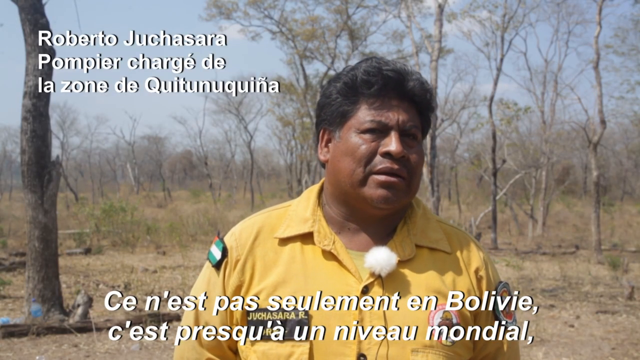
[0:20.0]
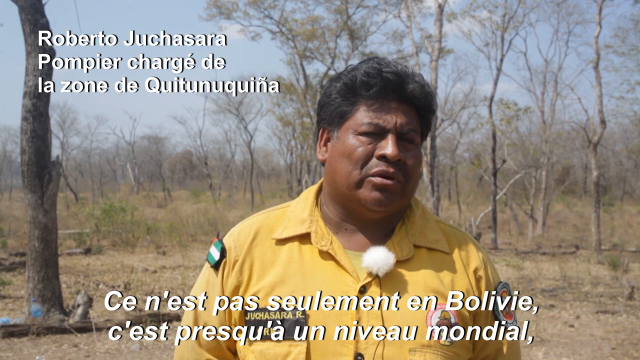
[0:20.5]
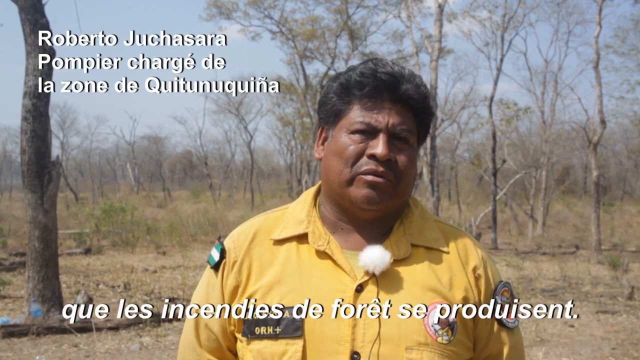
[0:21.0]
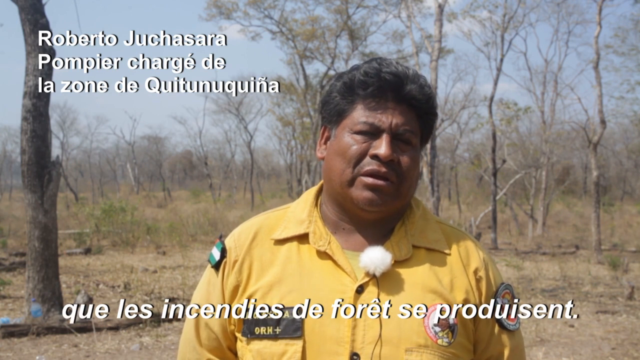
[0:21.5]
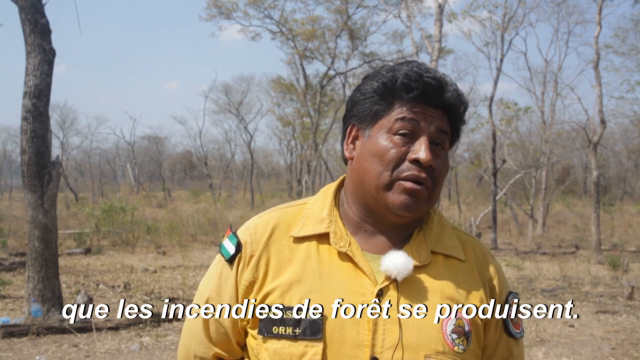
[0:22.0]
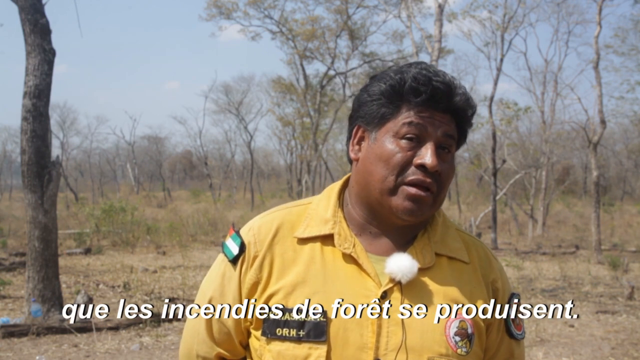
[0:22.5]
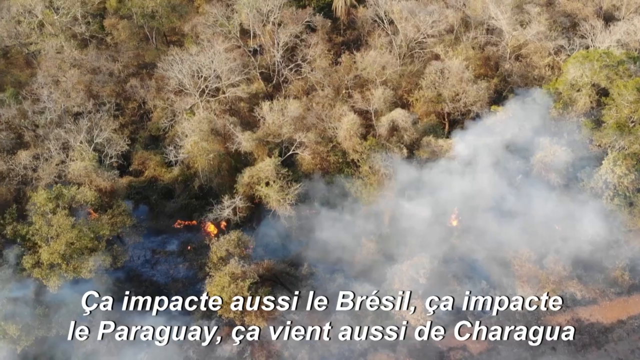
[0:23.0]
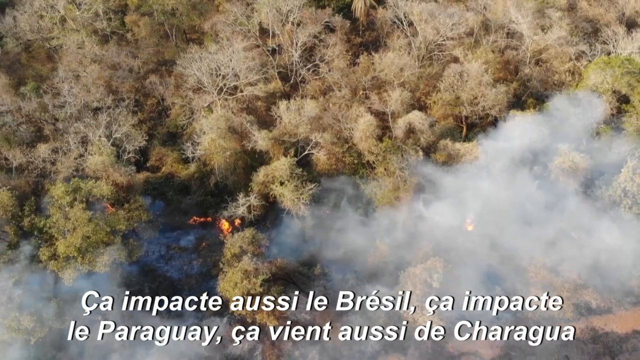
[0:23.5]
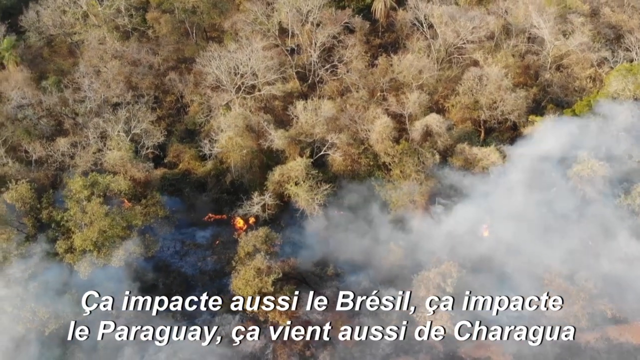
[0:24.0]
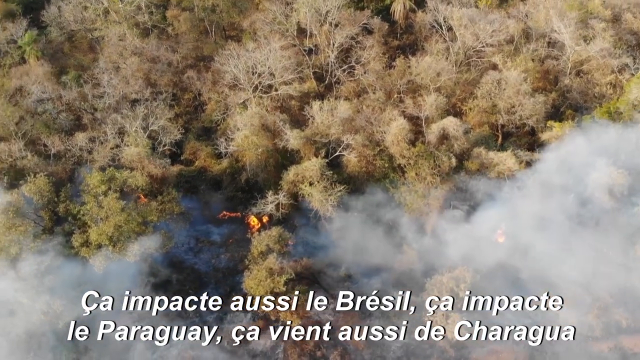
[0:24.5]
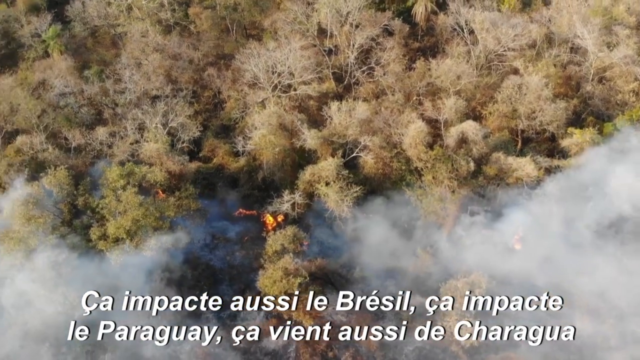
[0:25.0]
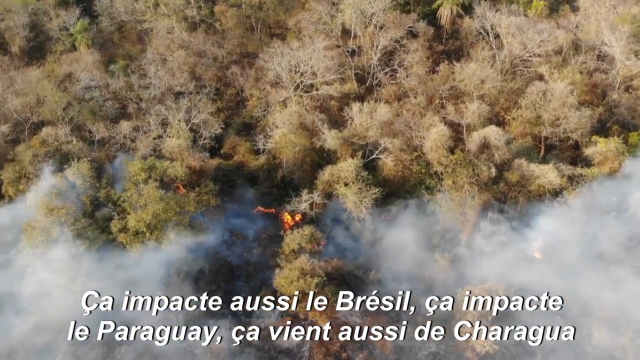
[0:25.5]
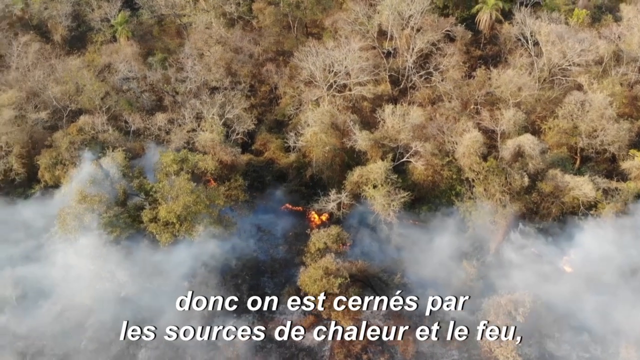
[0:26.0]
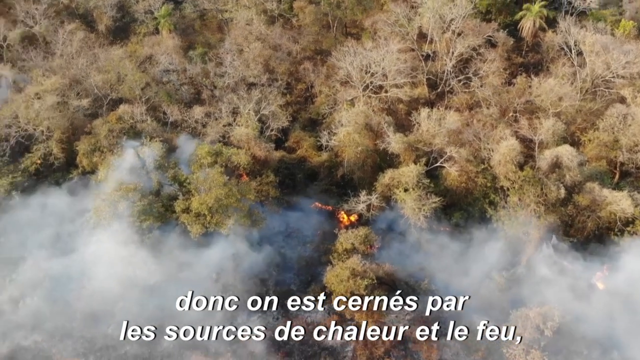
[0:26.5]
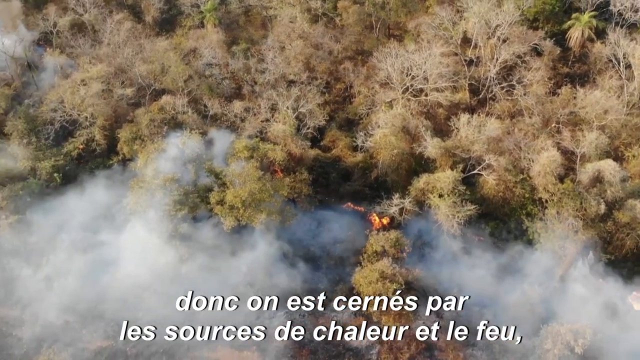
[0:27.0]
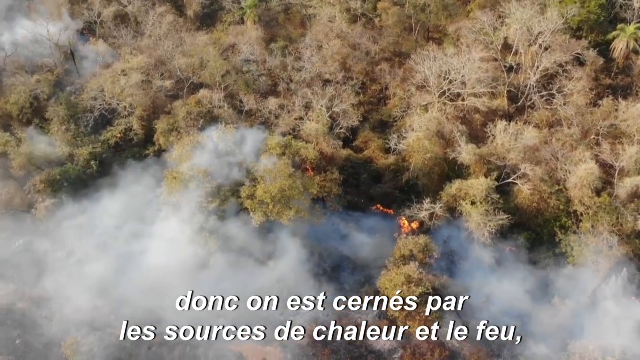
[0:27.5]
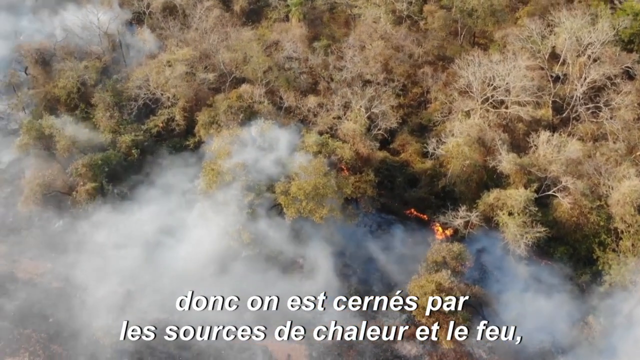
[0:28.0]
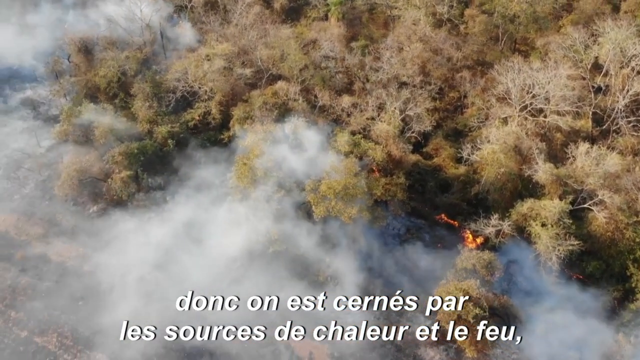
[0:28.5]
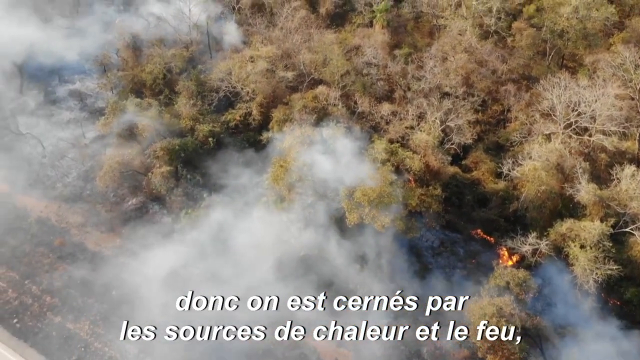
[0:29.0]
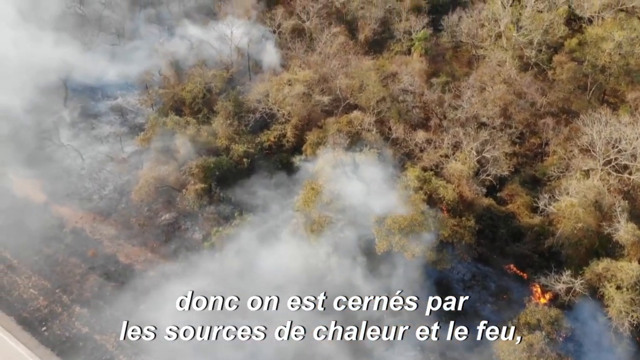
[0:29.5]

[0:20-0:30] The man in yellow is being interviewed. Text in the top left-hand corner of the screen gives his name, Roberto, along with his last name, and beneath that what seems to be his job or title, in a foreign language. There are also words at the bottom of the screen, one of which looks like it says "Bolivia". He is in the forest, where there is not a lot of green, many empty tree branches, and the ground looks very dry. An aerial view of the forest follows, showing patches of orange where there is fire and a lot of white smoke rising above the trees.